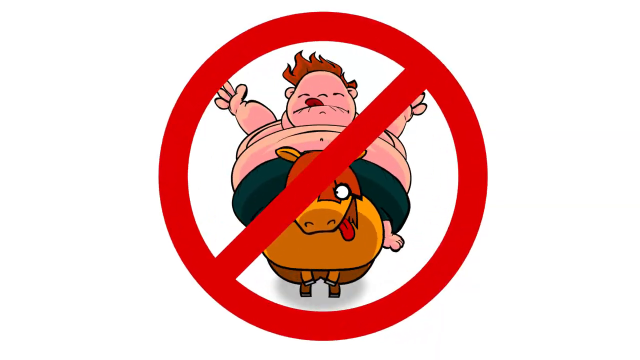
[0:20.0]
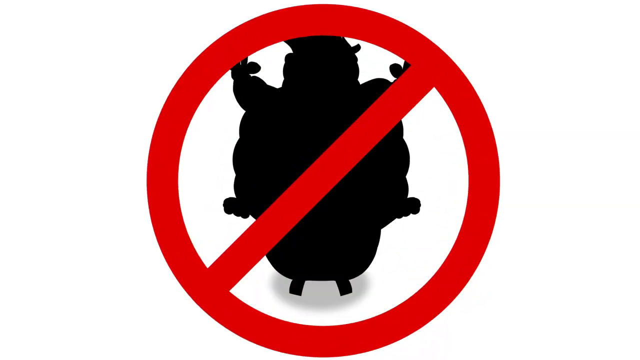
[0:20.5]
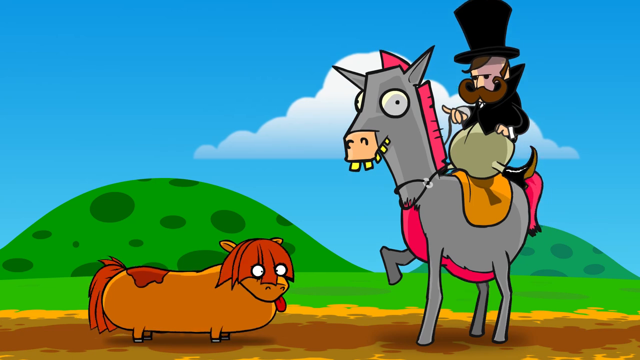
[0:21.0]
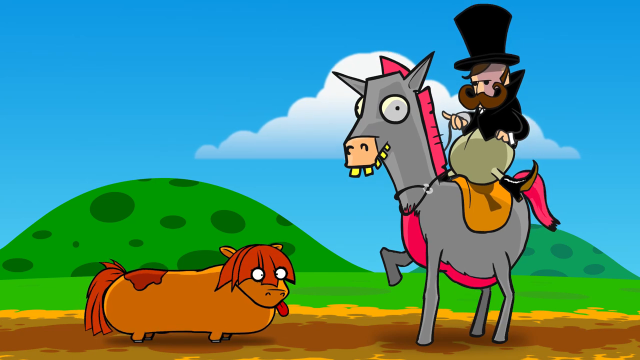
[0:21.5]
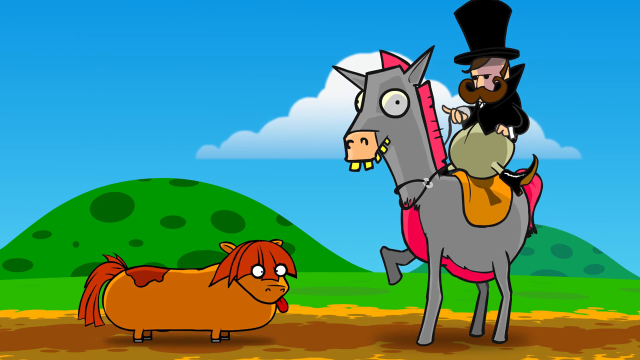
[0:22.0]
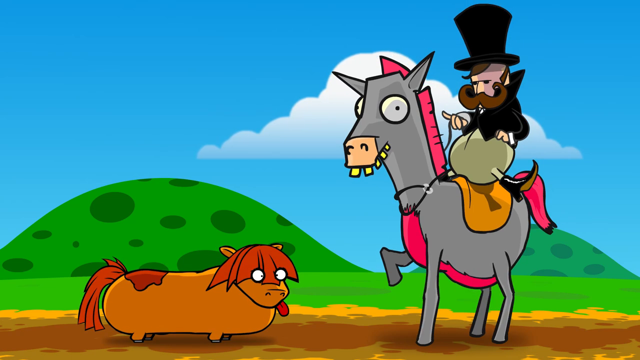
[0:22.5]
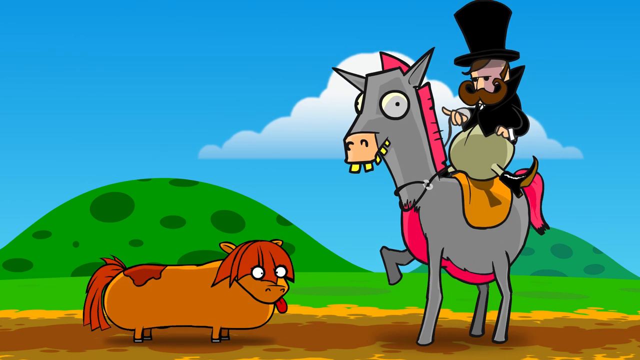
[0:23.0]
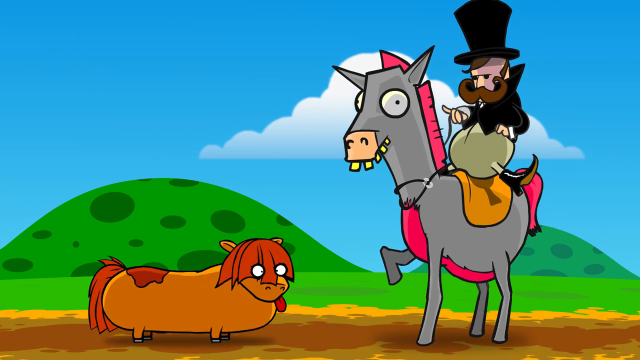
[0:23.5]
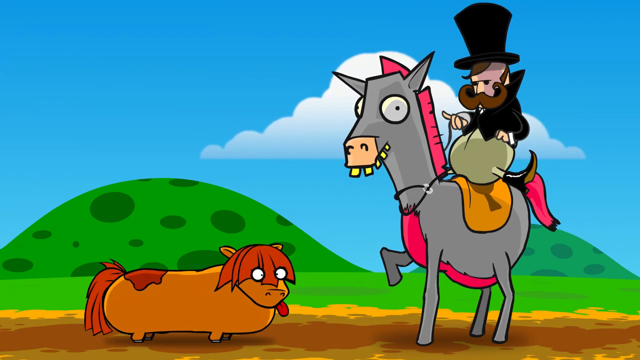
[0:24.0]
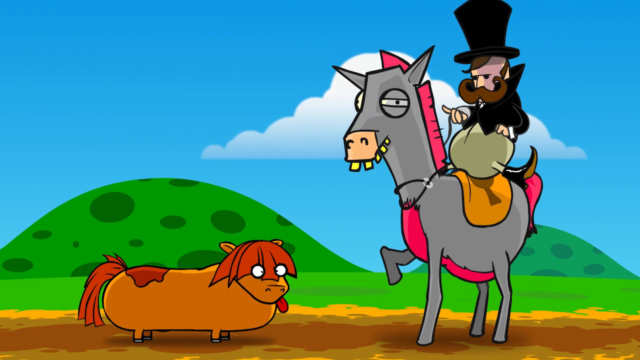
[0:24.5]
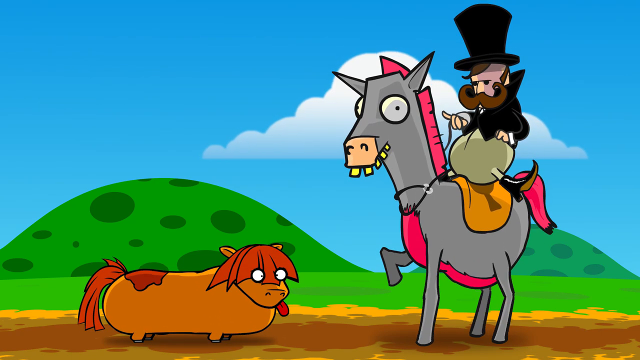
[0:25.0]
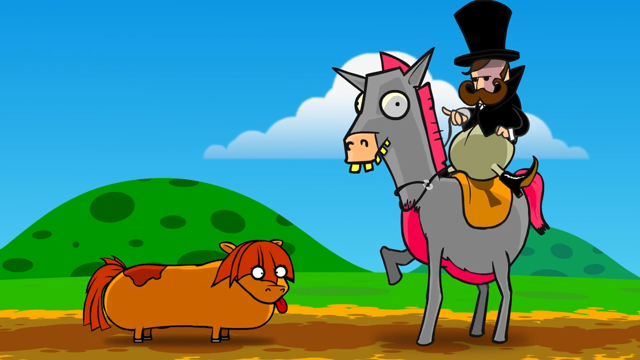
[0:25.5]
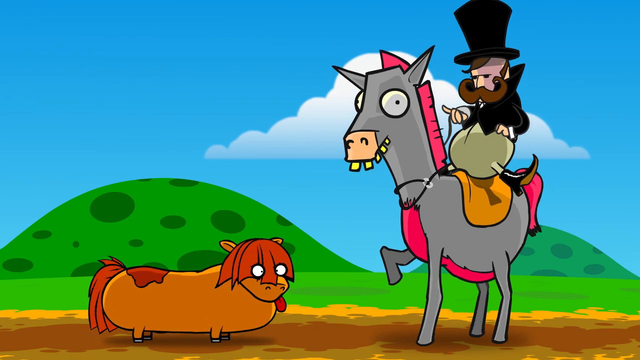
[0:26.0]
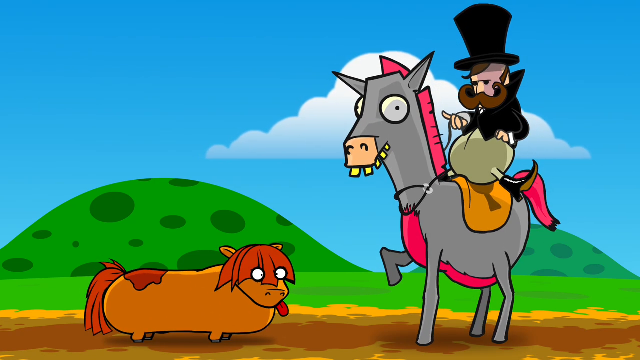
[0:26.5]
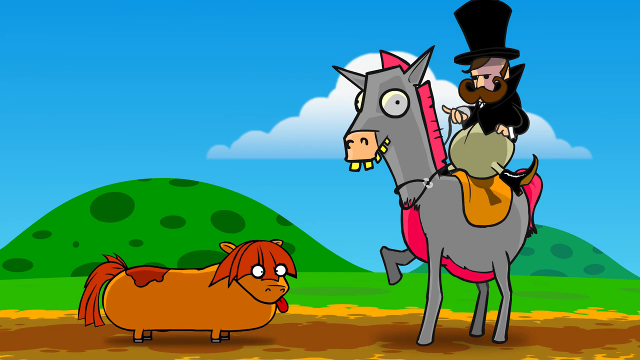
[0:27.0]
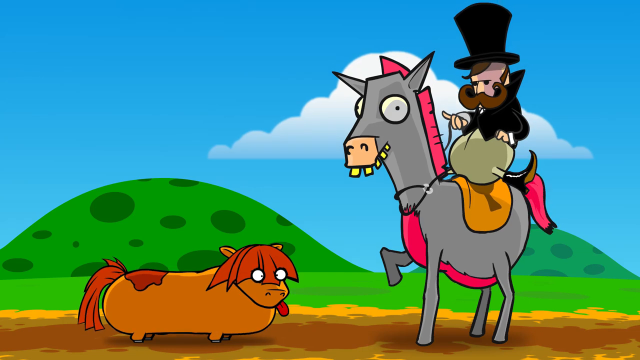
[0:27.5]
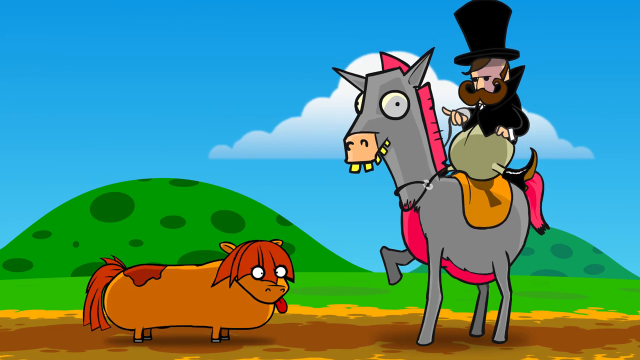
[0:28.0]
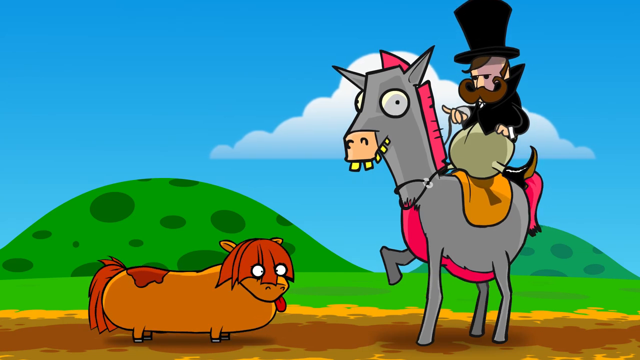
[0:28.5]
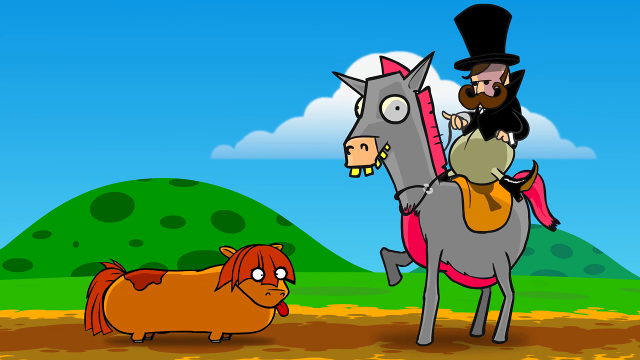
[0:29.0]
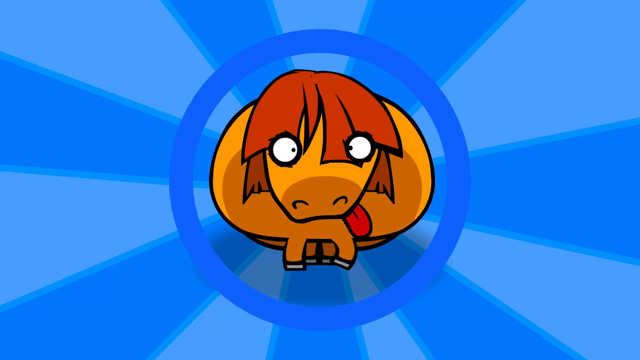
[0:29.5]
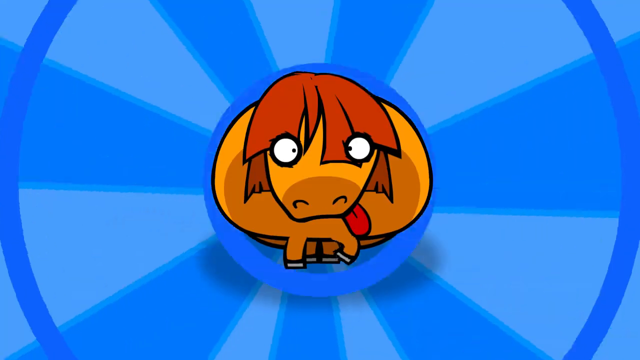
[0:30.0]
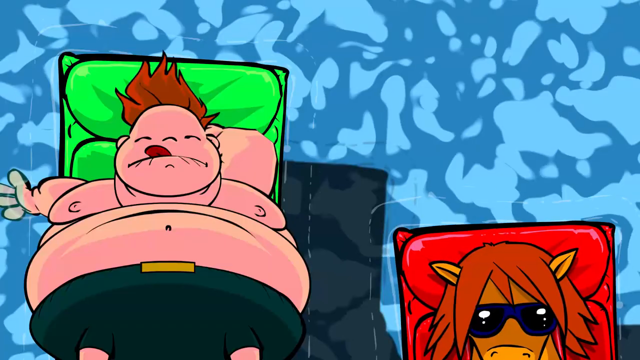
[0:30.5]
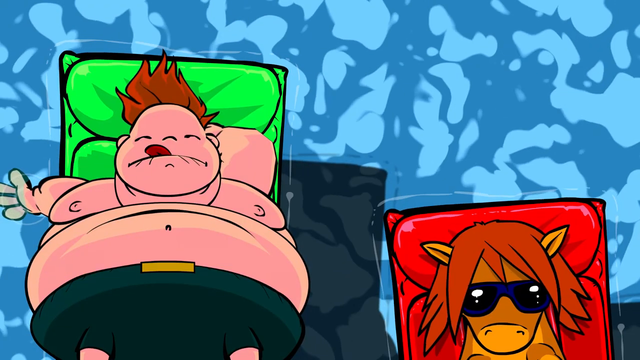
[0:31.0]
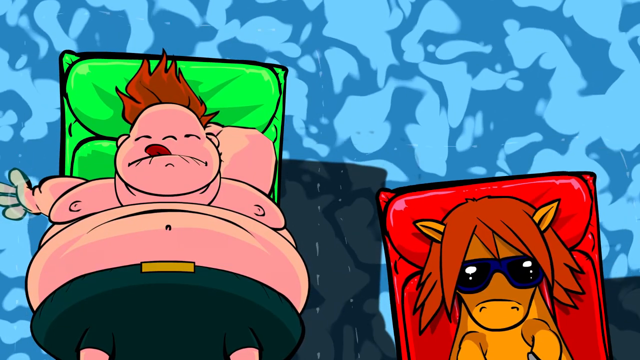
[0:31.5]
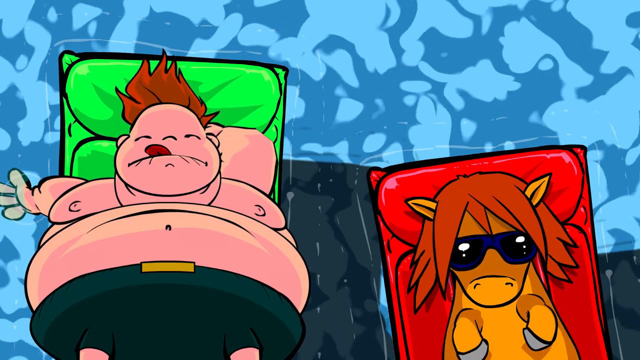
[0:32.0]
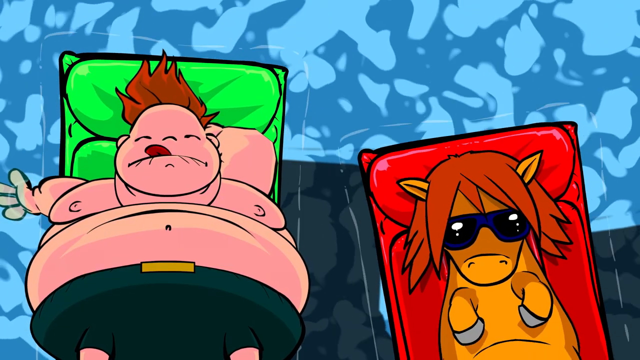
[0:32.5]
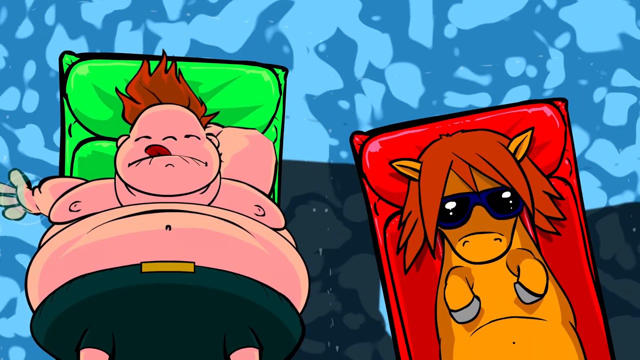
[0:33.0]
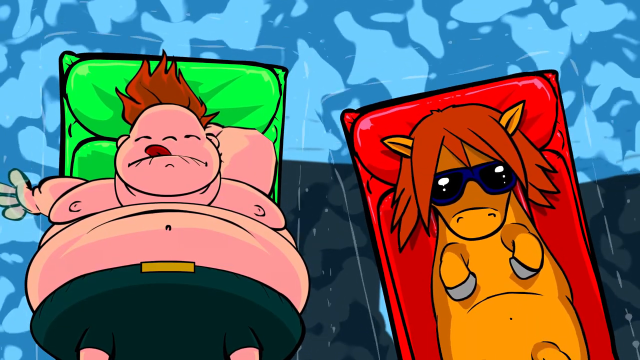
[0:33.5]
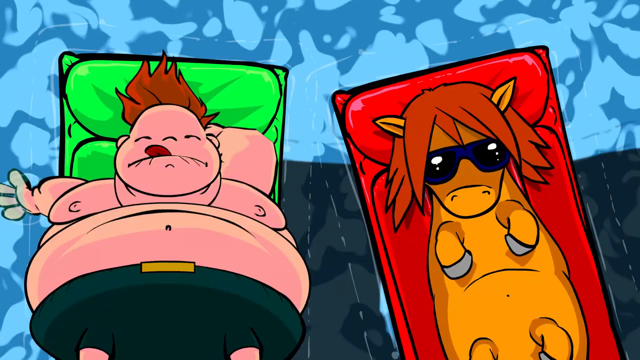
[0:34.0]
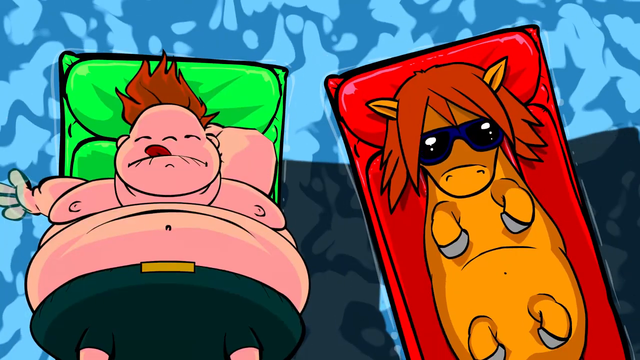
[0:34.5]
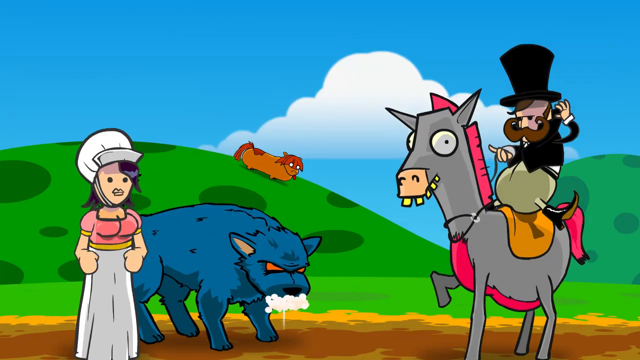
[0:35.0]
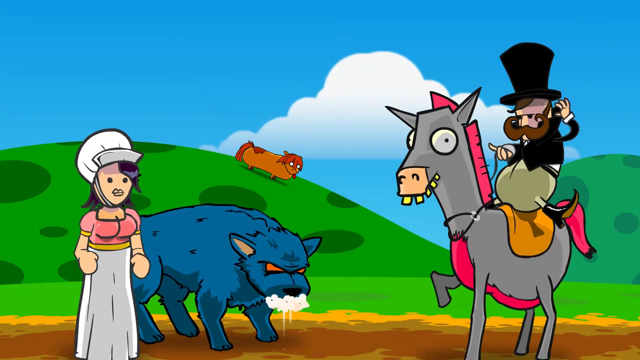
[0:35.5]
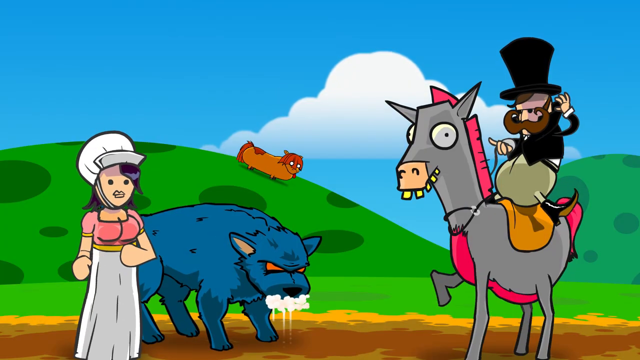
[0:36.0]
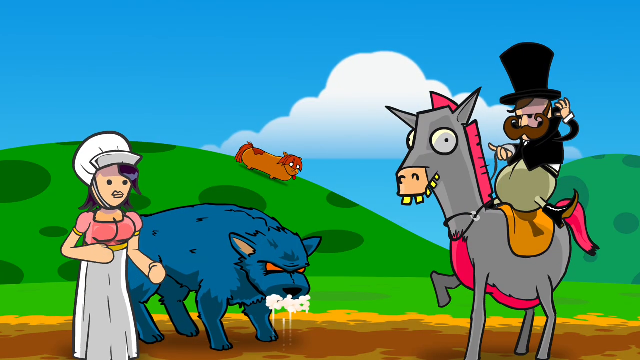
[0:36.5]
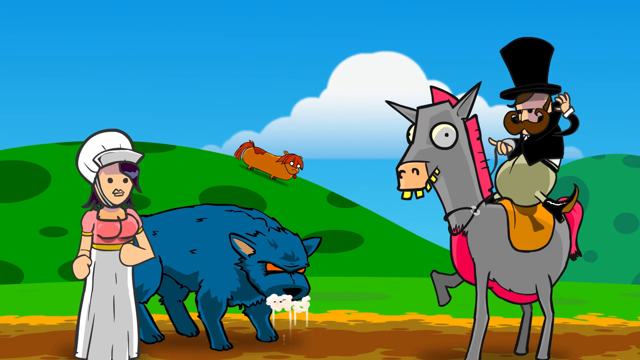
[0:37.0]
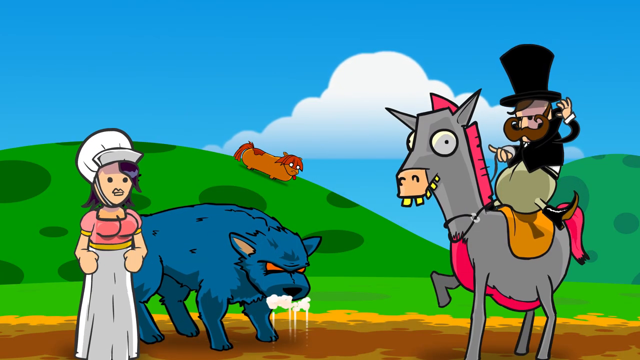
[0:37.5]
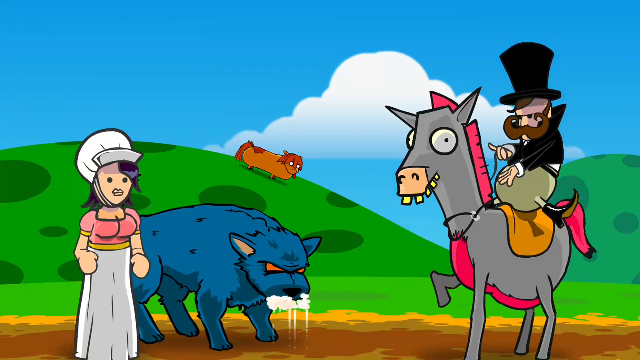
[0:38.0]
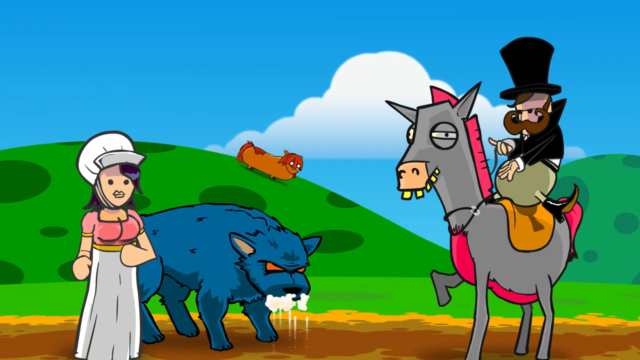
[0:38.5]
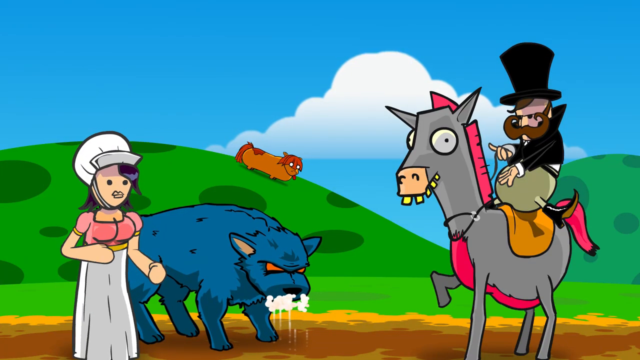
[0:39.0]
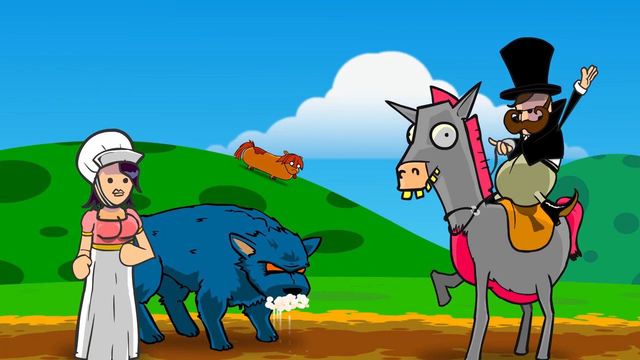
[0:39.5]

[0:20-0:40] A no sign appears: a red circle with a stroke through the middle on a white background, with the words "no riding the animals". Next the cow is on the left, facing right; it has quite a long body, a dark brown spot near the tail, and a round tail. On the right is what appears to be a horse, gray with some pink on the bottom and on the top along with the tail, a pinkish nose, five square yellow teeth showing, and wide-open ears. The rider of the cow wears a black coat, a black hat and black shoes and has a mustache. The horse has its front right leg up. Then the cow is in a swimming pool, on the right side, sleeping face up on a red floating bed, with blue glasses over its ears. The overweight kid is also sleeping in the pool on something green, still with his tongue out. Two characters are then shown: a female wearing a white hat, a pink t-shirt and white trousers, and, on her left, a blue wolf that is growling, with bubbles at its mouth, facing the horse and the man riding the horse.